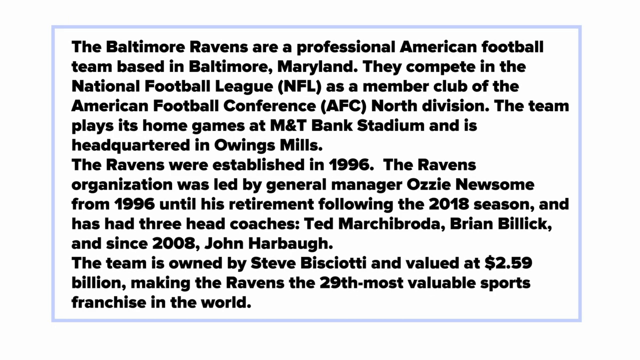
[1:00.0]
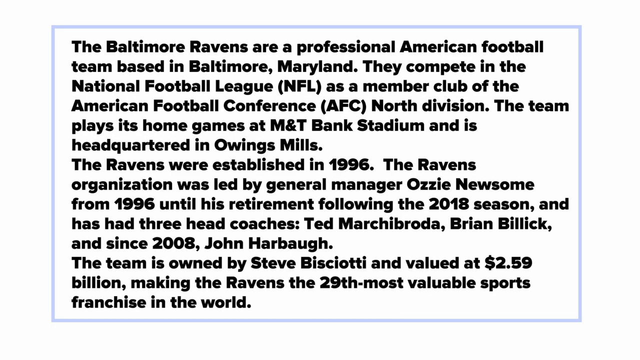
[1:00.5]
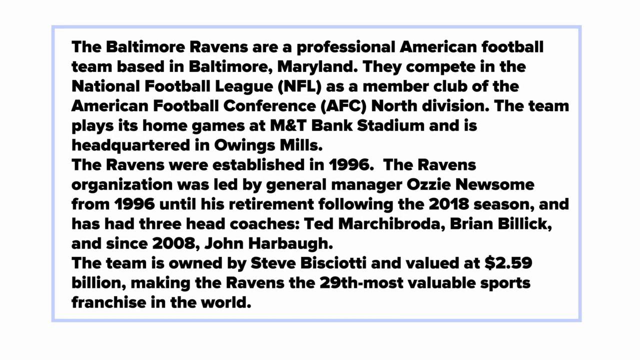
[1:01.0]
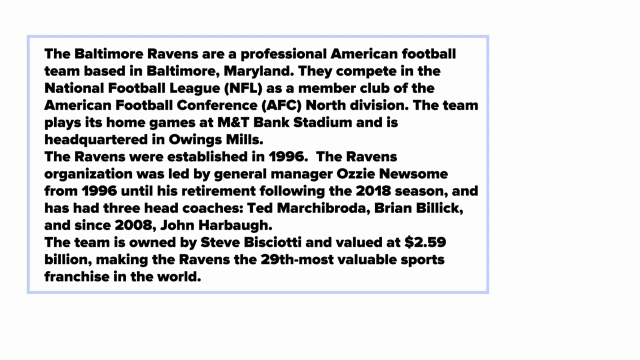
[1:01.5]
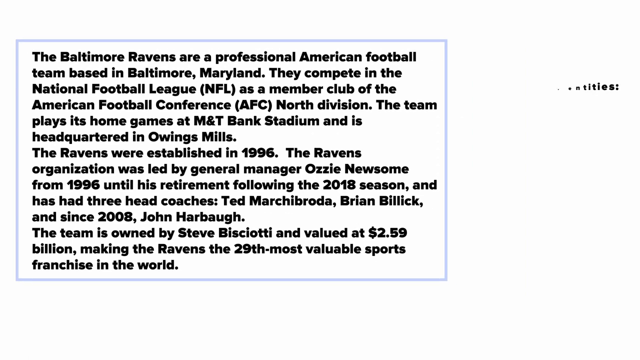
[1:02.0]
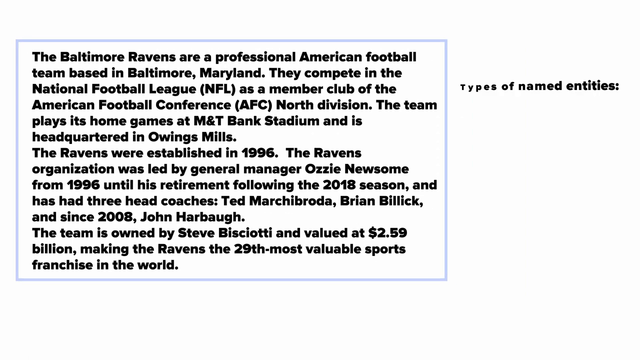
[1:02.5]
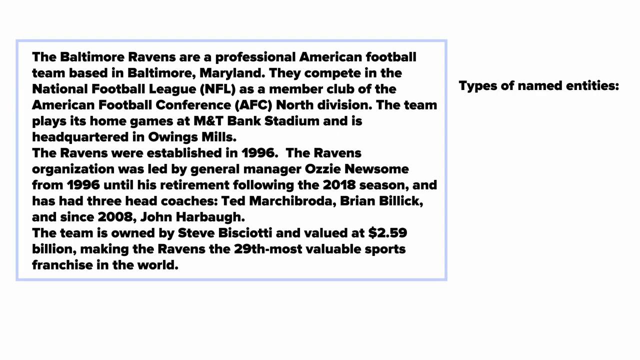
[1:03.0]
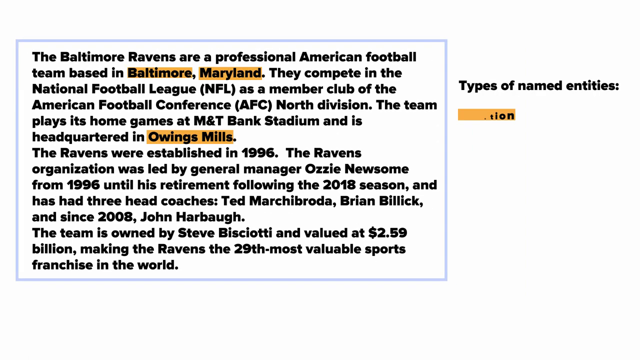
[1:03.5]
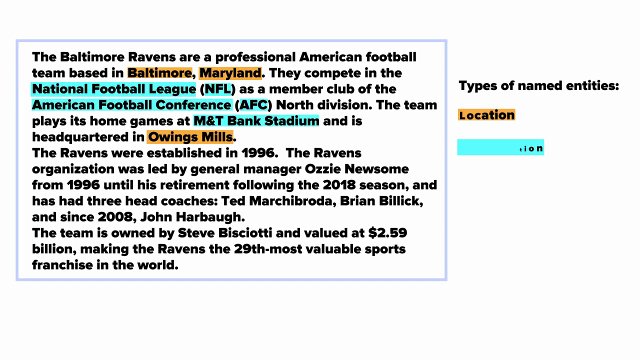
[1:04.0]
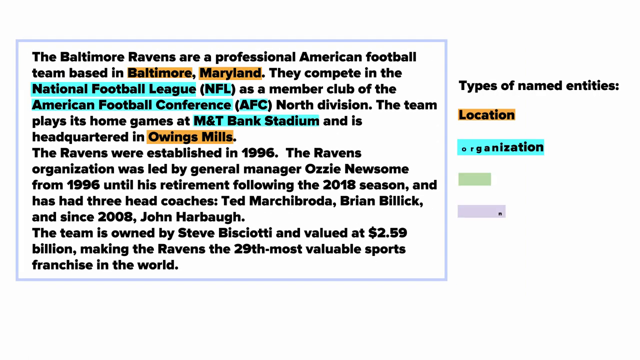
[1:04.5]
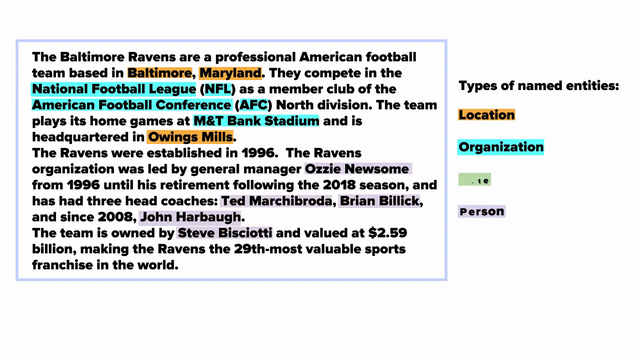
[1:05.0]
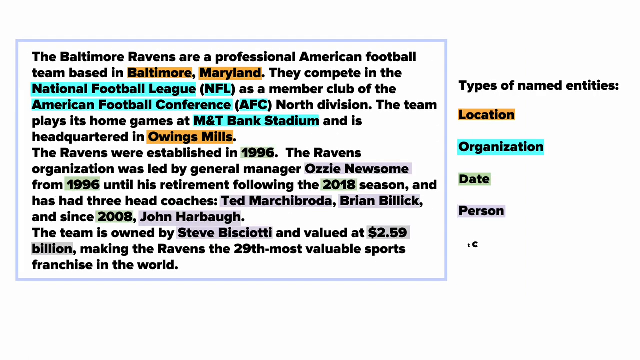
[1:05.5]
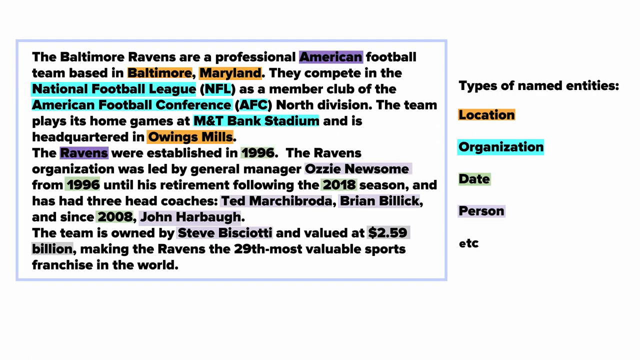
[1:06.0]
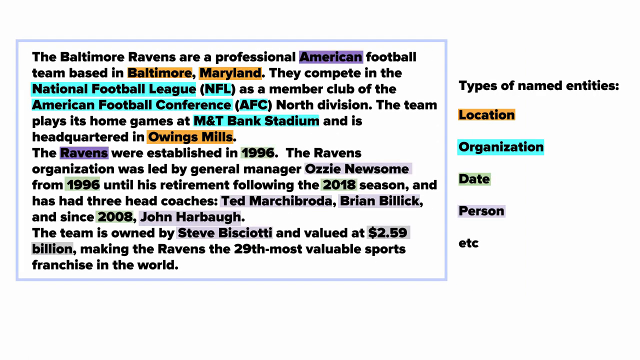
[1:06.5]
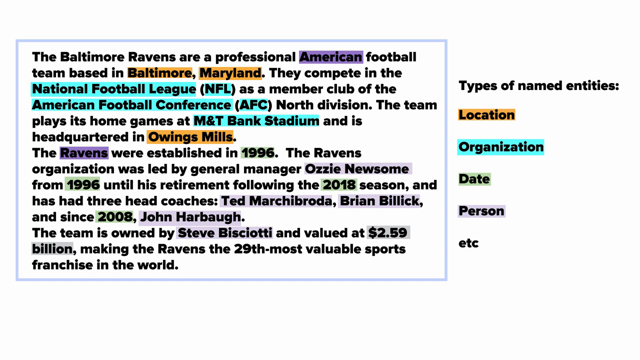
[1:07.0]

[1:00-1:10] A wall of text is bounded by a light blue line that separates it from text that appears later on the right side. The text is about an American football team: where it is based, how it was established, what happened to the founder, the general manager, who owns it, and its value. The text on the right shows how the algorithm differentiates the information: locations highlighted in orange, organizations in light blue, dates, numbers and years in green, people in light purple, and some other items distinguished from plain text.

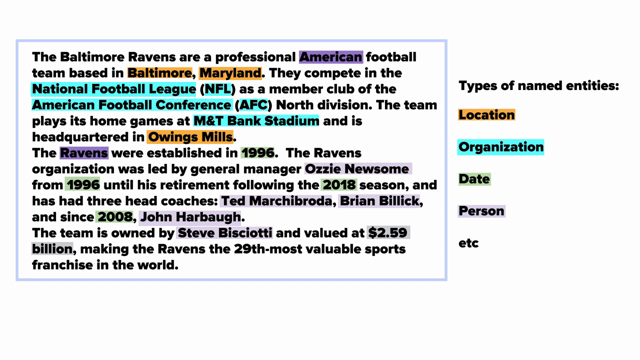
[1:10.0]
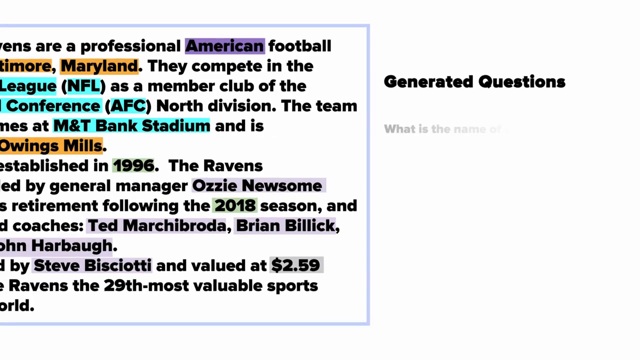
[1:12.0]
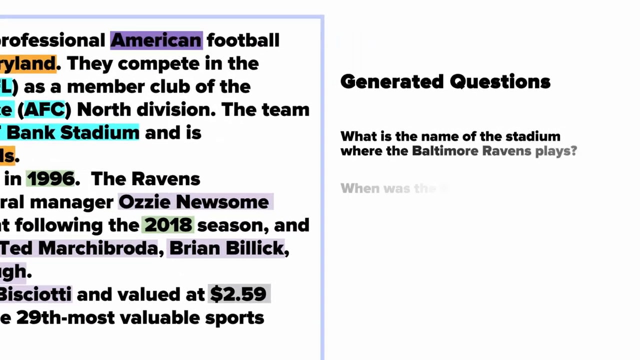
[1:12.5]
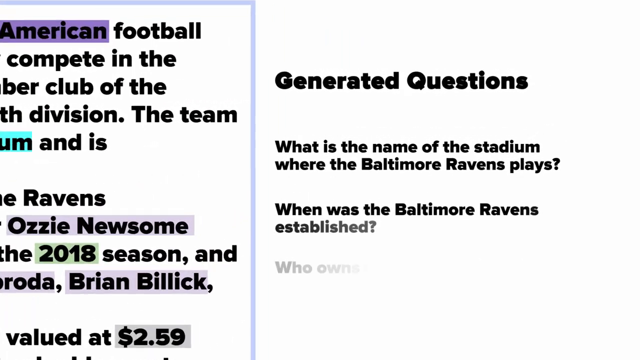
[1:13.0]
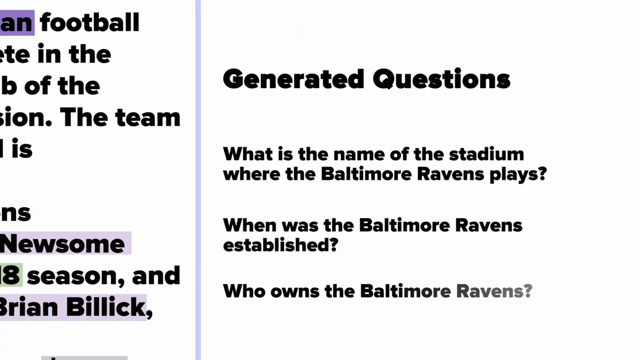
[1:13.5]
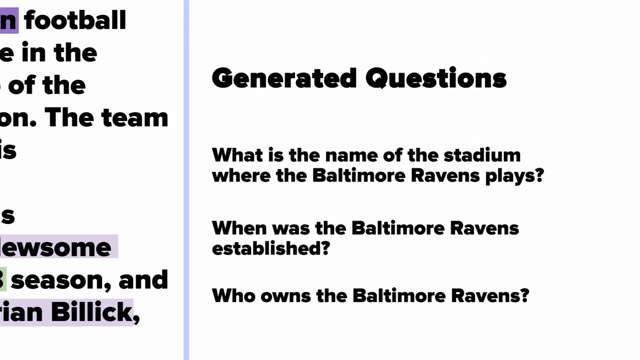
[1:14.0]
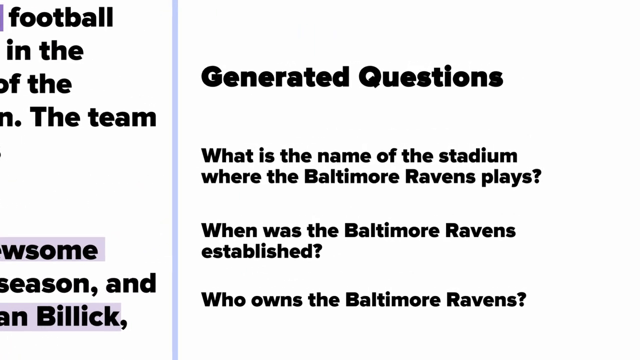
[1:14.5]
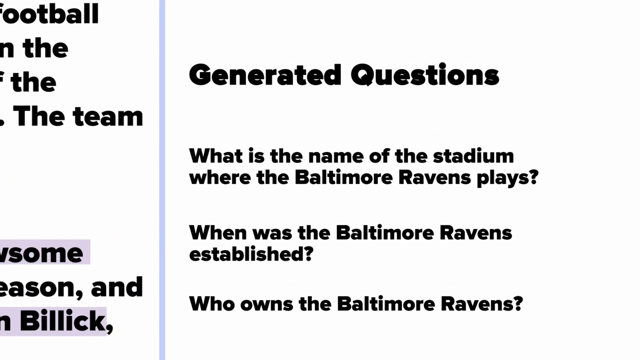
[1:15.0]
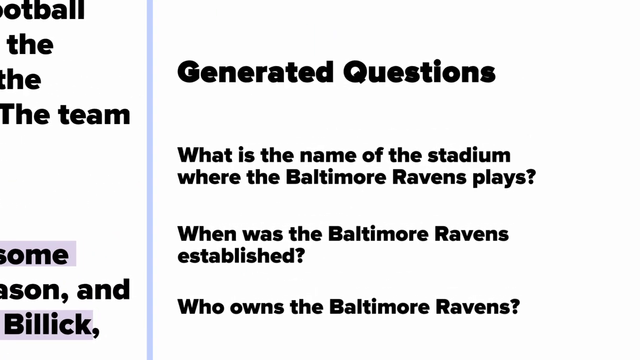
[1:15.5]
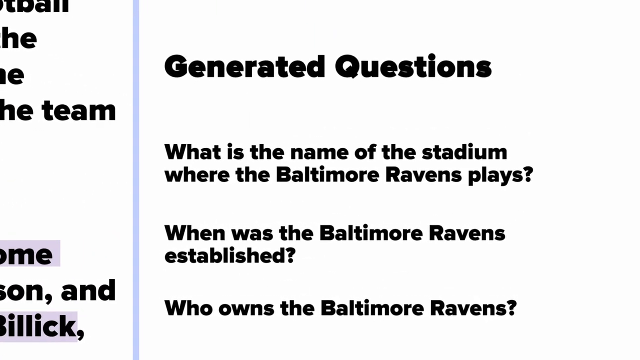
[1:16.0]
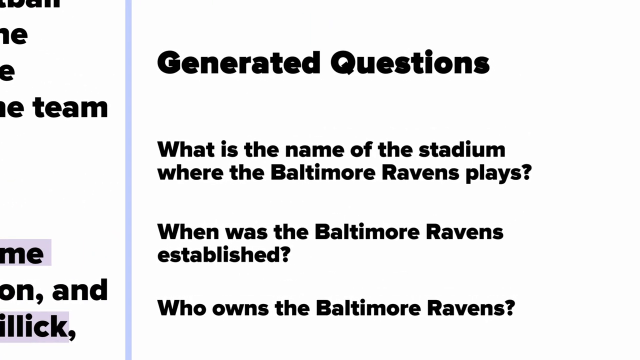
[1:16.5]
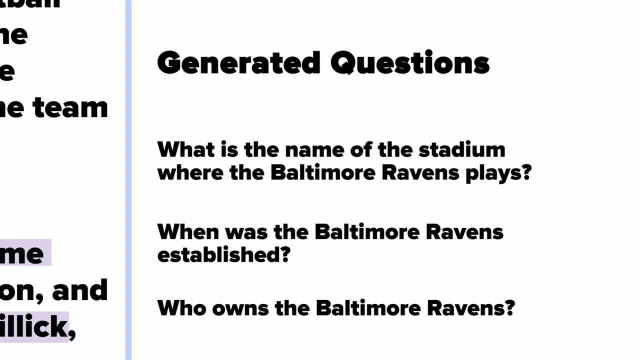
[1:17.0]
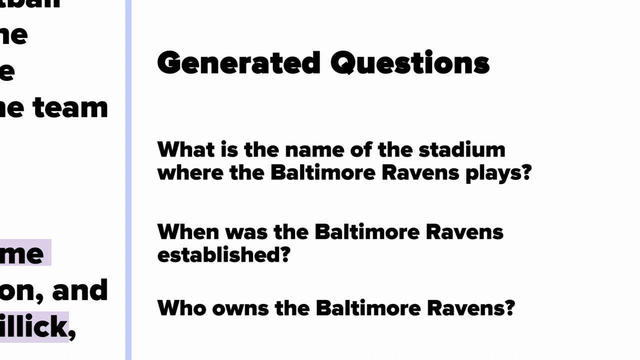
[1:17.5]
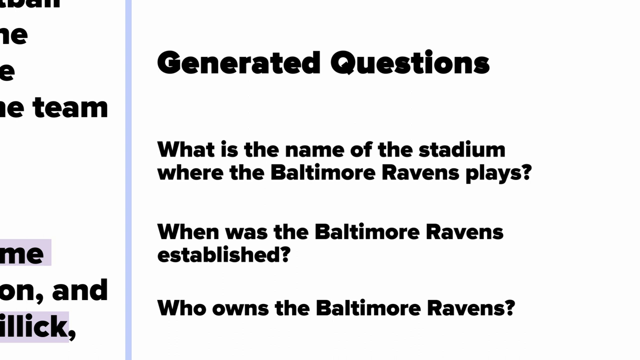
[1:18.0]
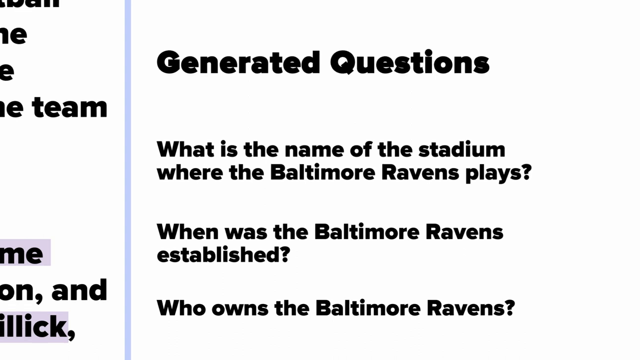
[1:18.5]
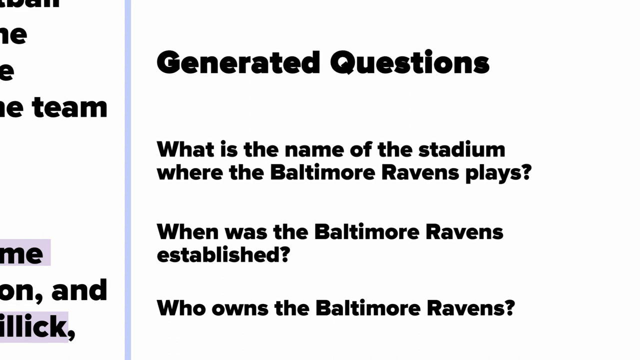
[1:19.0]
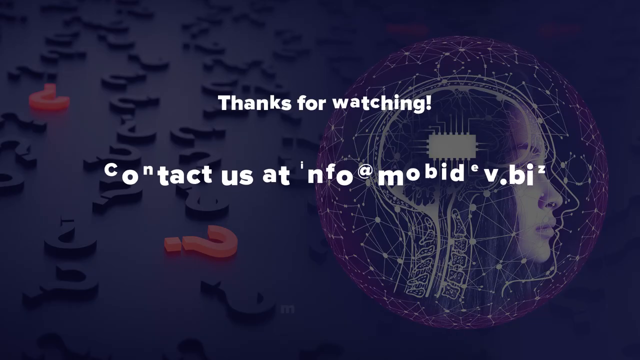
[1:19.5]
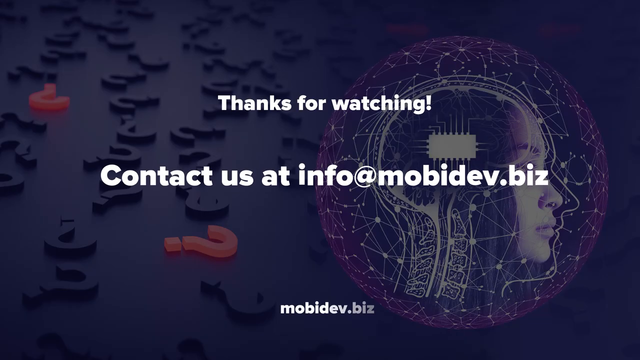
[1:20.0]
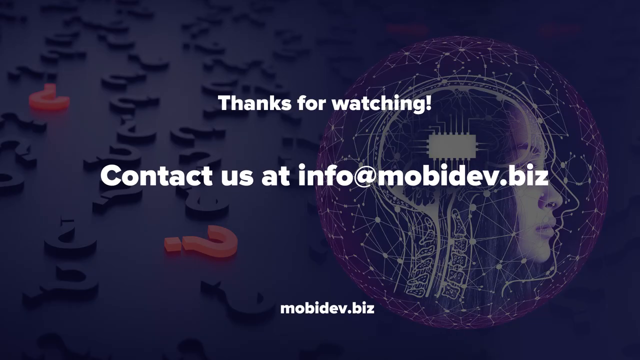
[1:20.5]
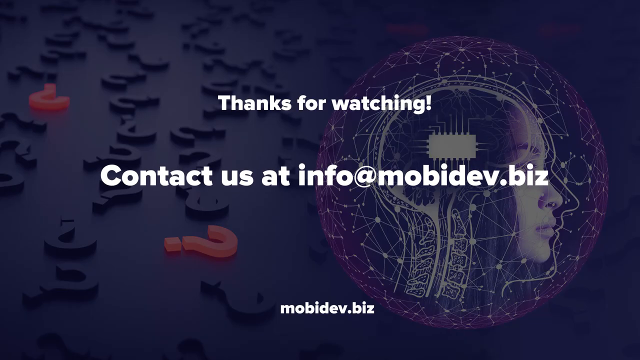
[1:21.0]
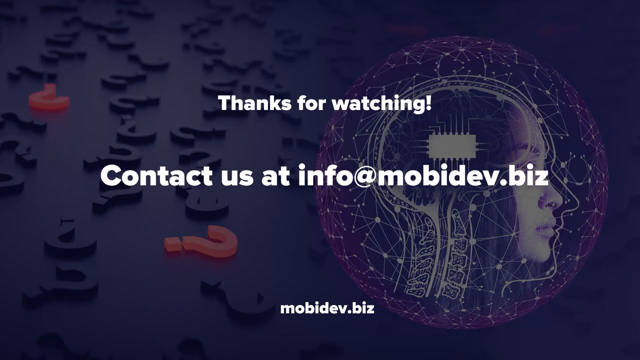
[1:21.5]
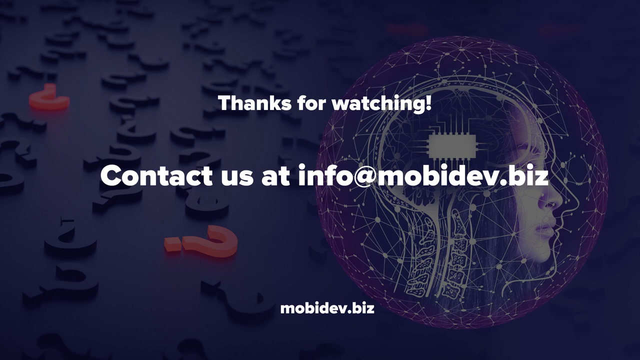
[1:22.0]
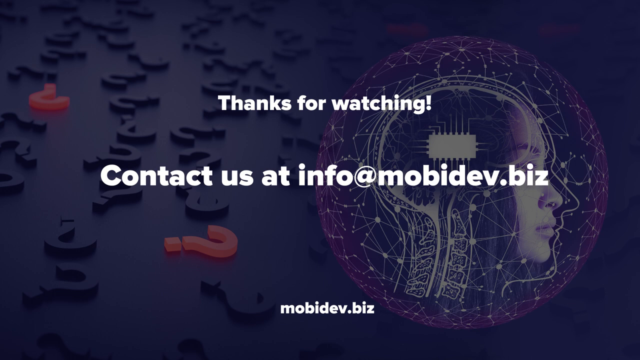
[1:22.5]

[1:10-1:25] The same image is shown with questions on the right side generated from the text on the left side. The questions include what the name of the place where the team plays is, when it was established, and who owns it. The view zooms in on the questions, then an outro appears on the original blue background with the familiar human face, a thank-you for watching, and contact information.